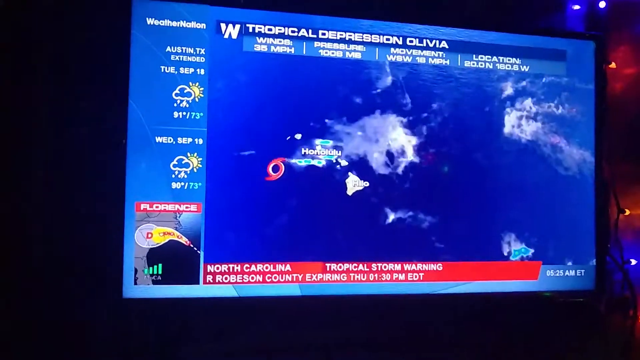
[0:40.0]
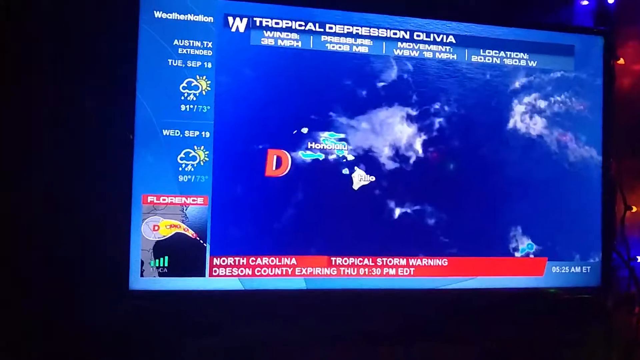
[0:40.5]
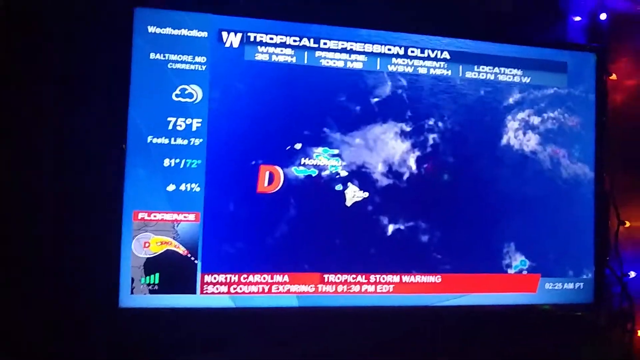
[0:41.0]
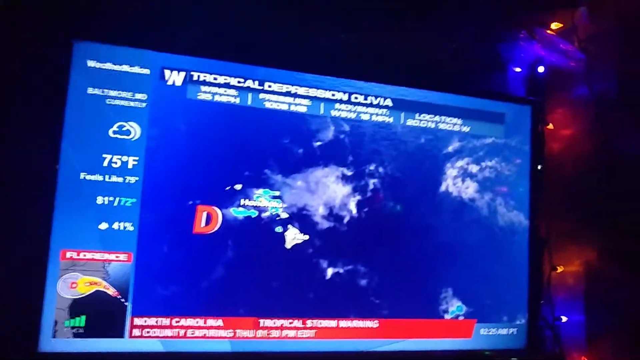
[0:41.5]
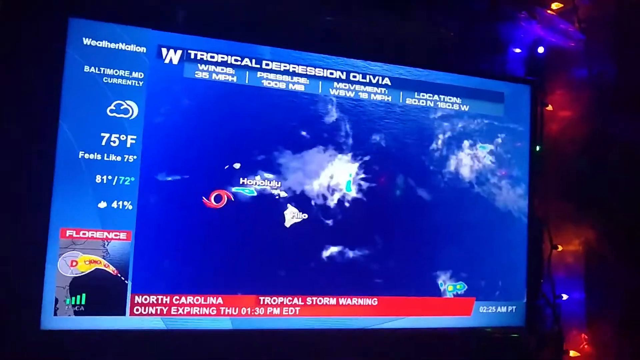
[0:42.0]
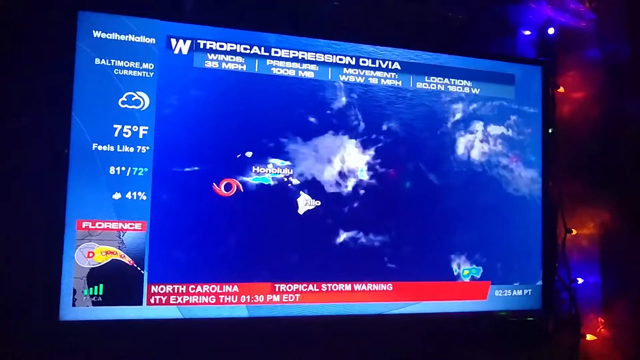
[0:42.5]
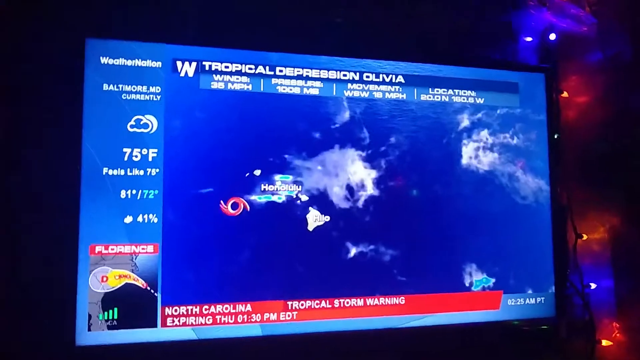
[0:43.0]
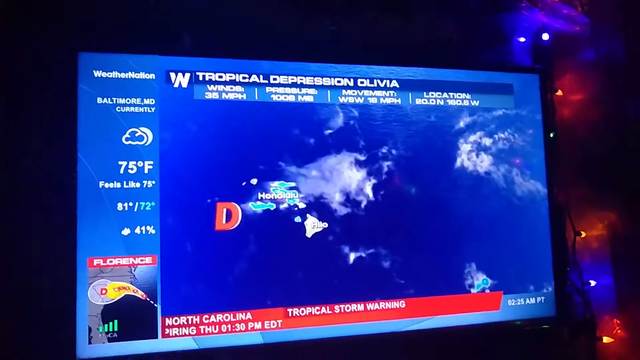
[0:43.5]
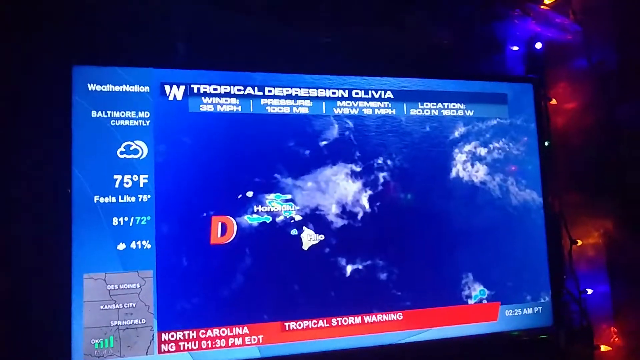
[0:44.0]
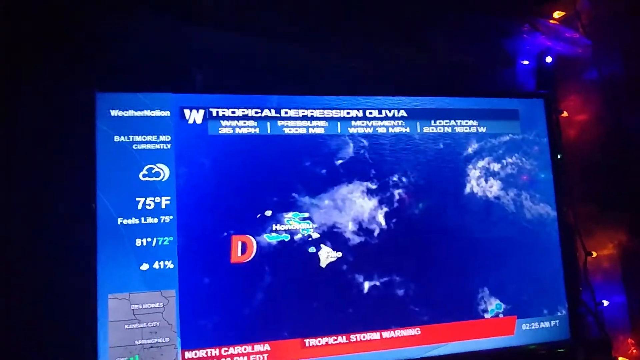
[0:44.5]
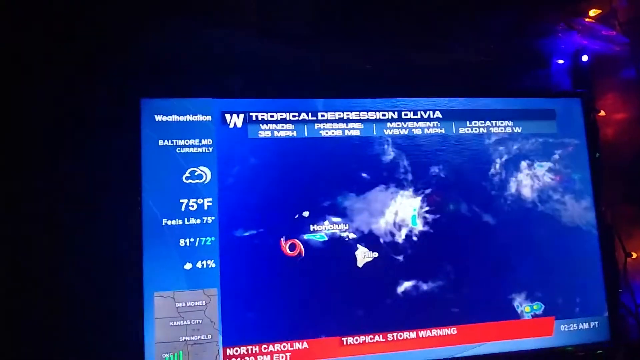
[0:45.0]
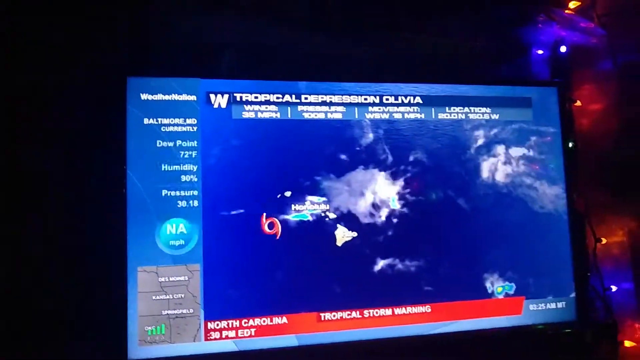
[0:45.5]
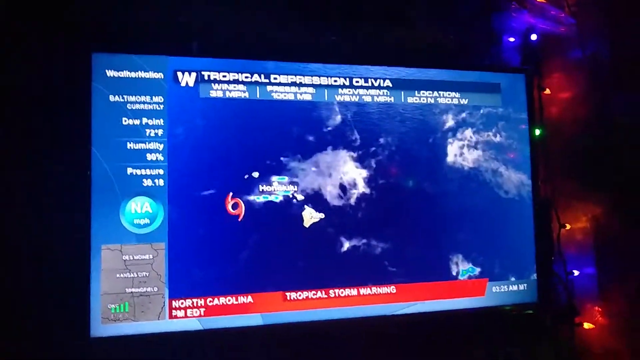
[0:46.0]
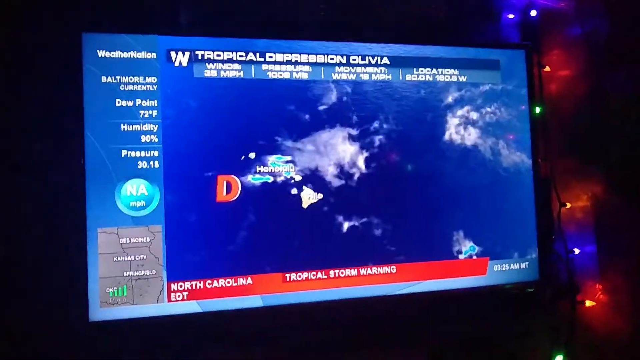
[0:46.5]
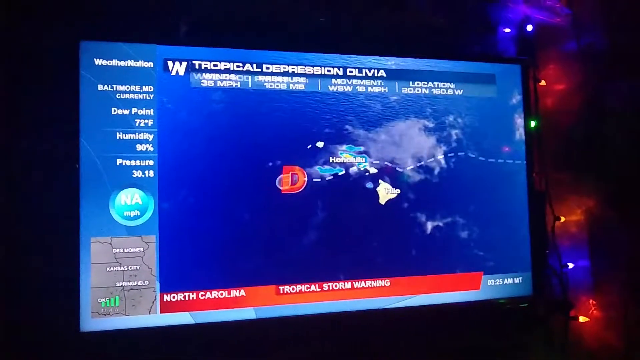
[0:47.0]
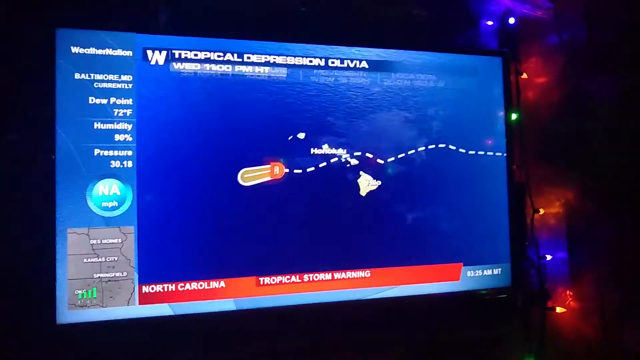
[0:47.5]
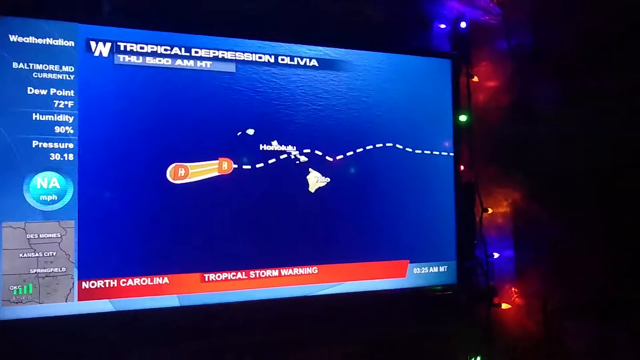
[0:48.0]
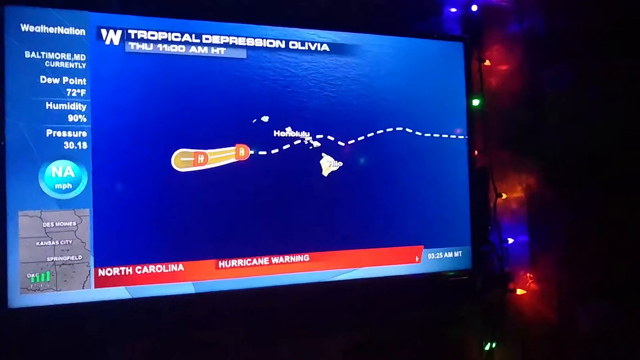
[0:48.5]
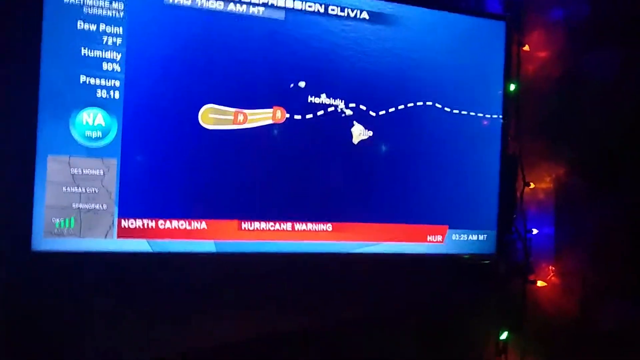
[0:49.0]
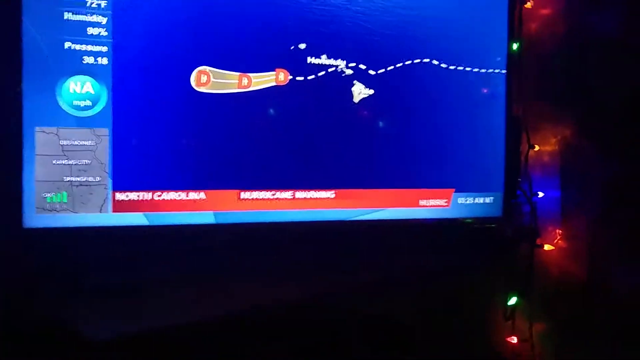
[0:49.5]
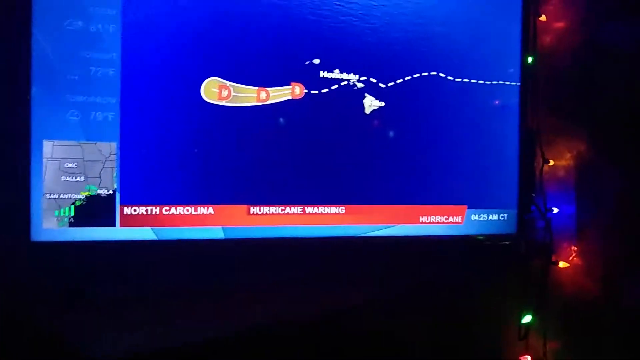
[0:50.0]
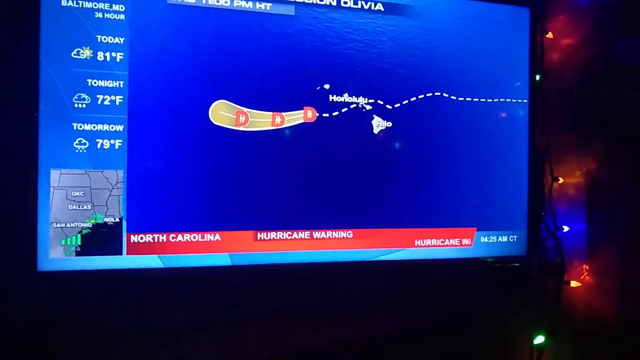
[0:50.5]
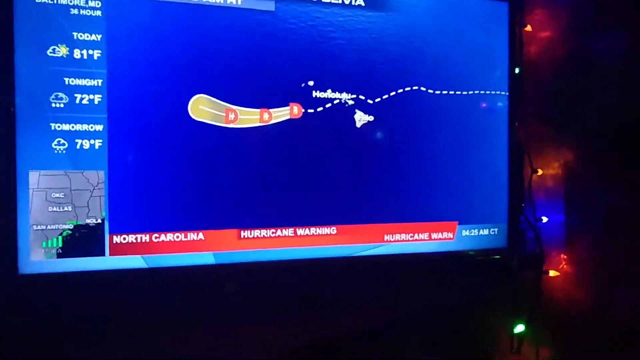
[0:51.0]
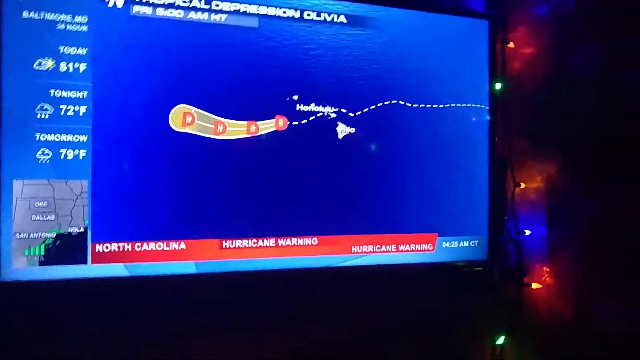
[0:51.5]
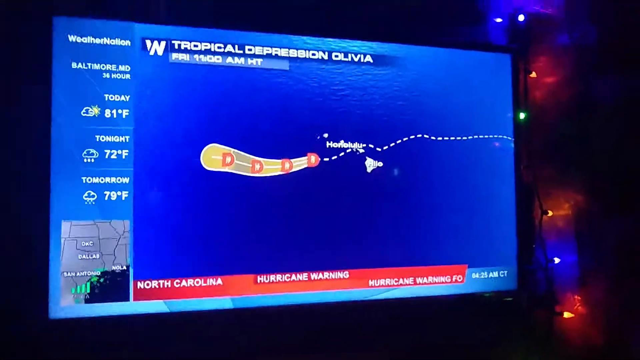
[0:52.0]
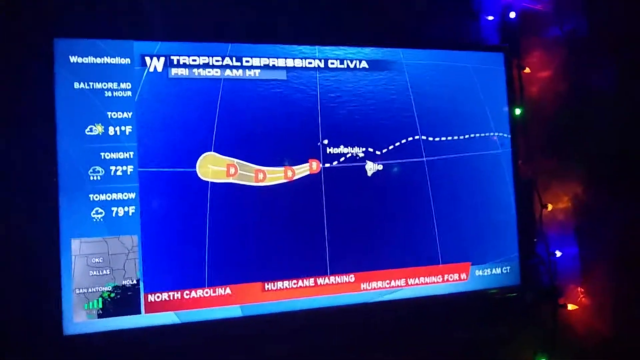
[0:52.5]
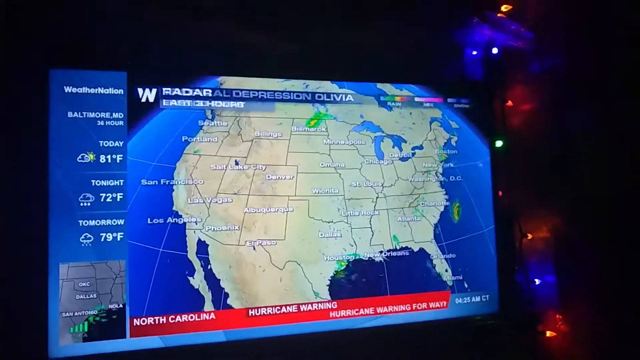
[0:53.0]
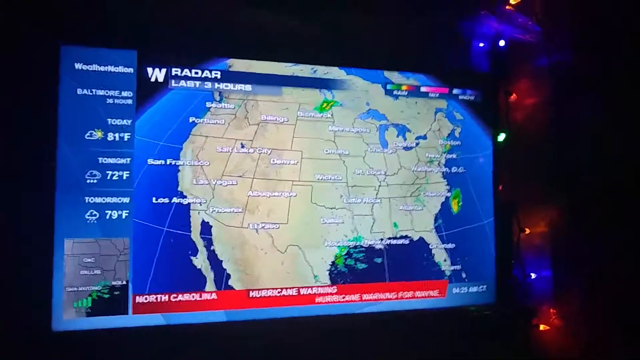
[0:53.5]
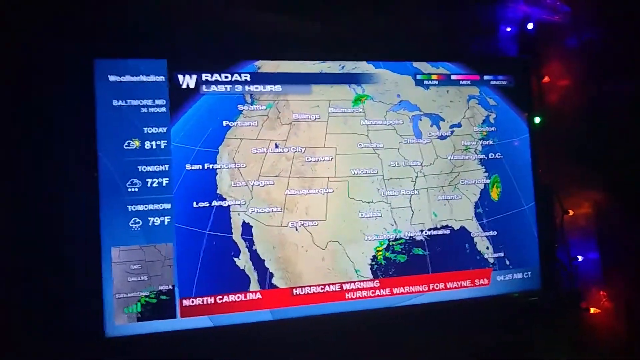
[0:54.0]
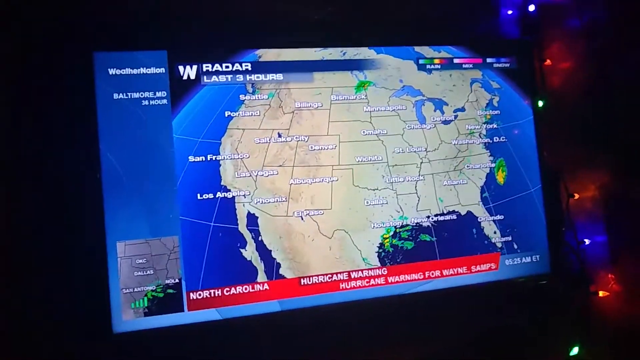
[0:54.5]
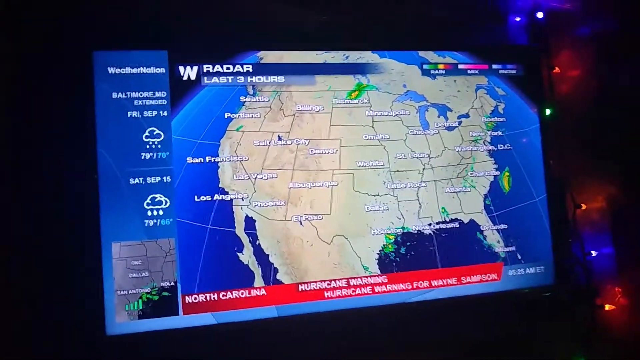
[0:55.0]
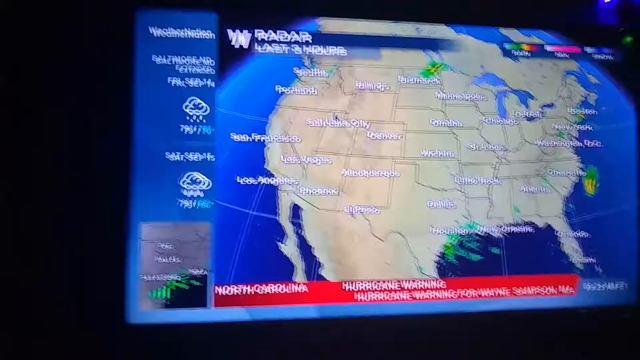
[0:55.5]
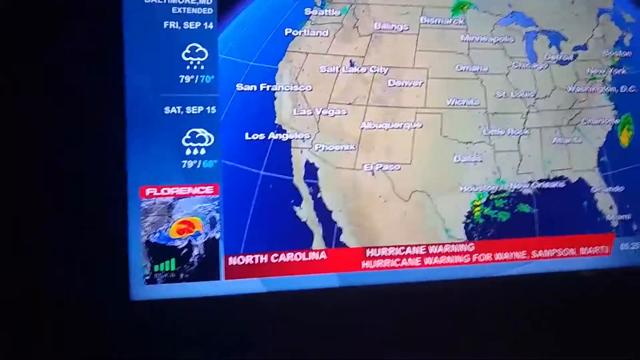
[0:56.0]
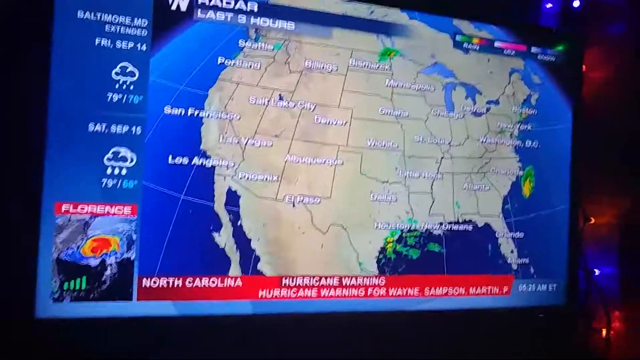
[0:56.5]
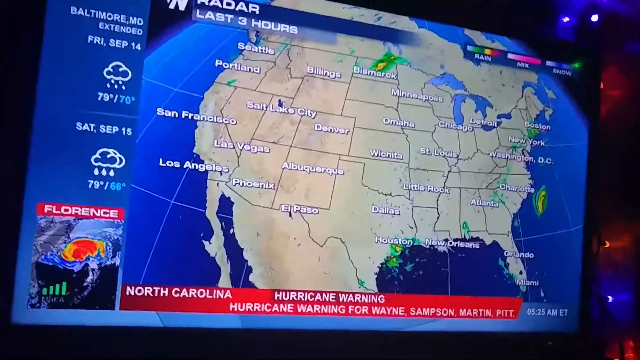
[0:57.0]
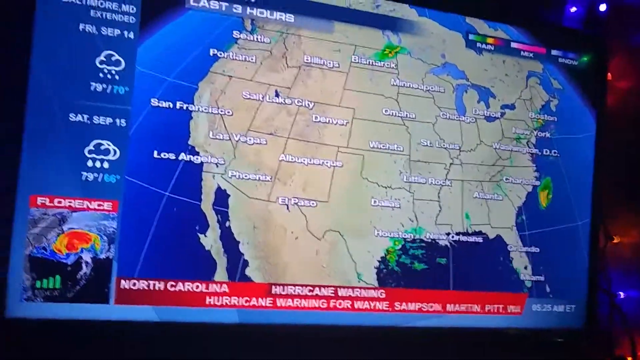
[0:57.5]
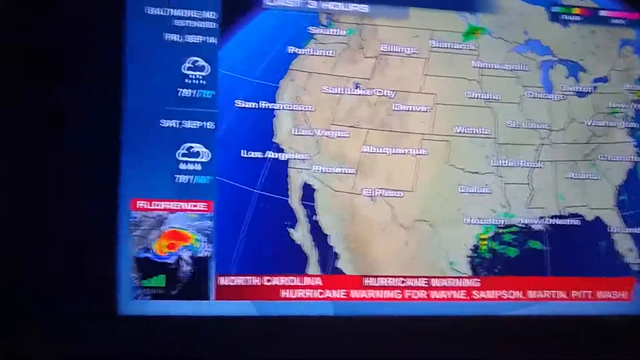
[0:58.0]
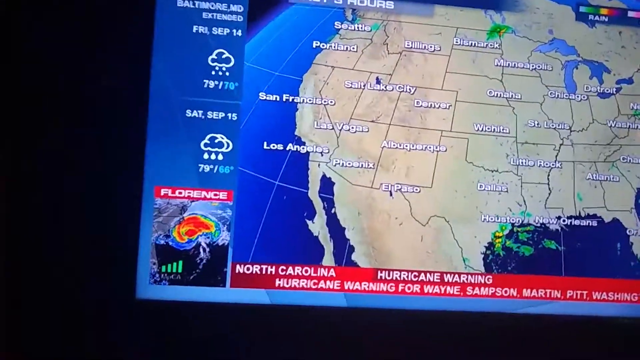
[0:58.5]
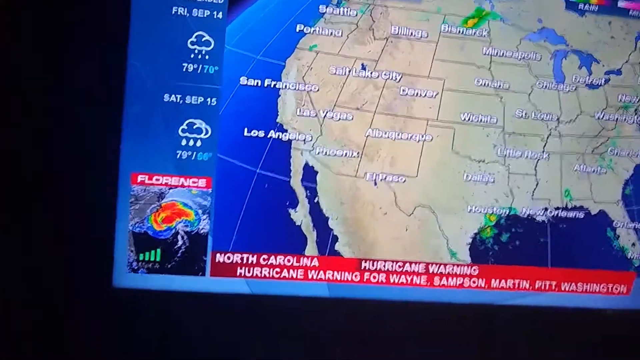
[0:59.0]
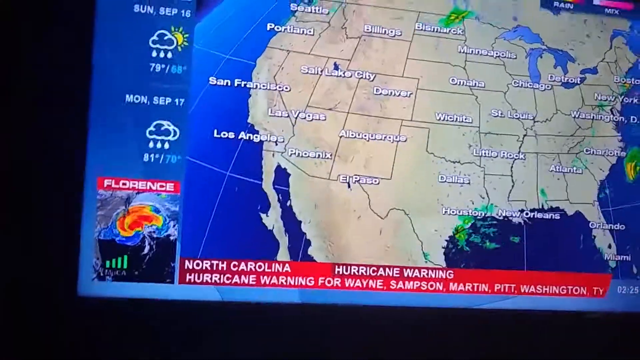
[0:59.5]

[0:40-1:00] The screen shows Hawaii with Honolulu highlighted in blue. A hurricane icon to the left of the island turns into a D icon and then back into a hurricane icon, which is red and spinning, then briefly turns into a D icon again. The camera filming the screen zooms out slightly, revealing lights behind the television screen, perhaps some sort of Christmas lights. The screen shows the path of the hurricane with the white line and the yellow area, with D all along the path. It then transitions to a full map of the United States with "radar, last three hours" at the top left. Sparse green areas appear in parts including southeastern Texas, near North Dakota, in the top left at Seattle, and off the coast of the Carolinas, with some minor yellow interspersed. The camera shakes and tries to zoom in on the screen.